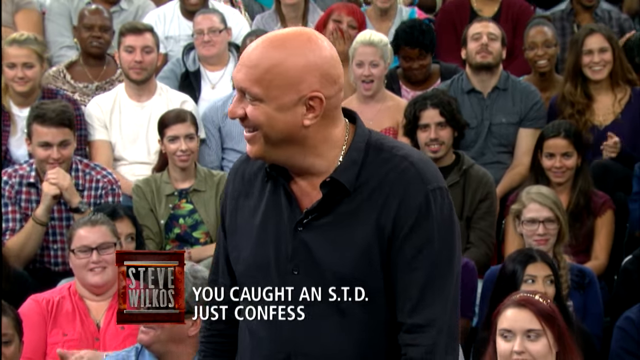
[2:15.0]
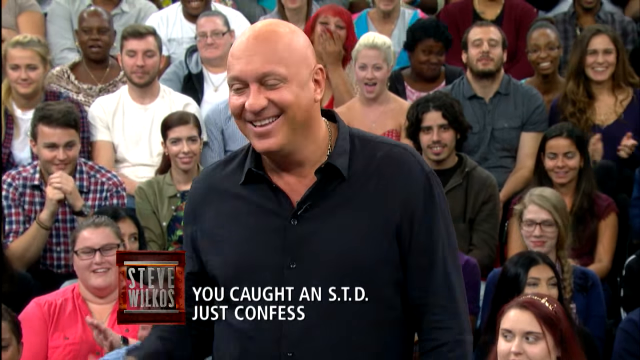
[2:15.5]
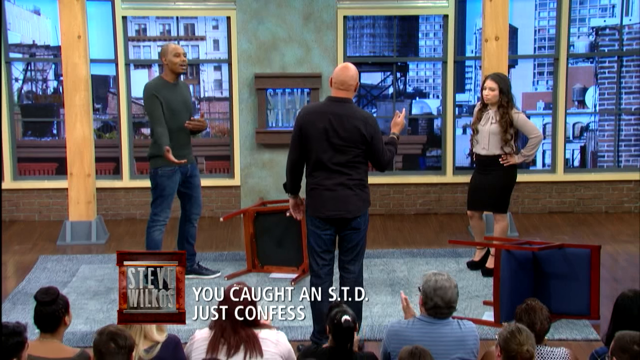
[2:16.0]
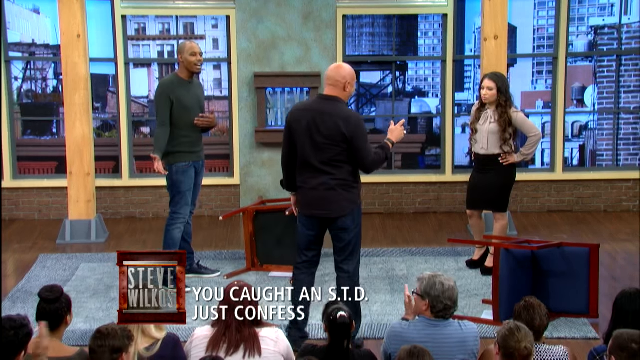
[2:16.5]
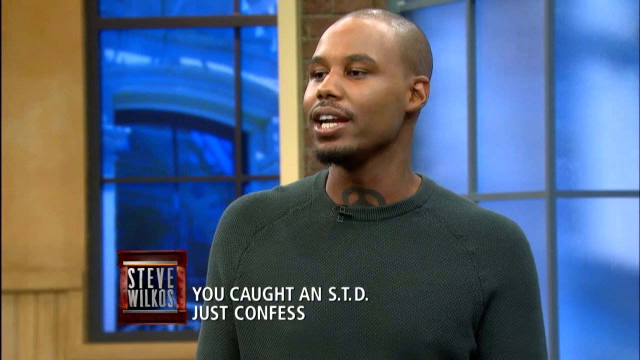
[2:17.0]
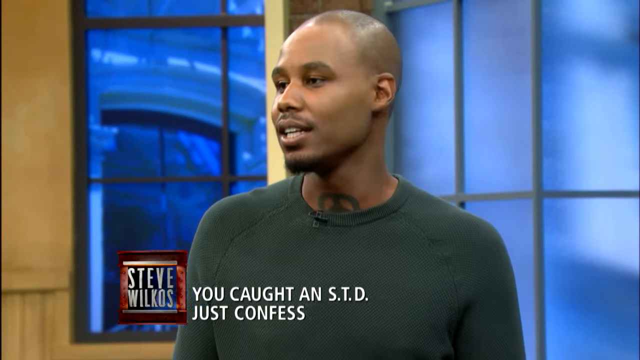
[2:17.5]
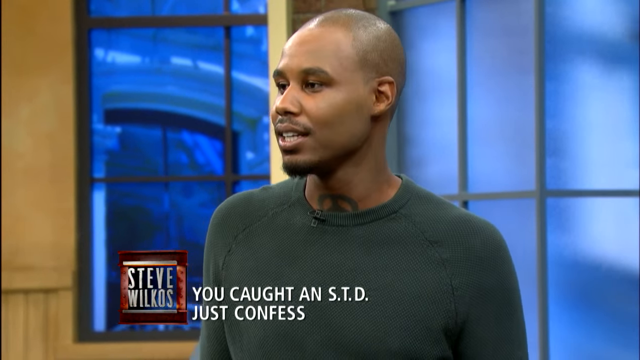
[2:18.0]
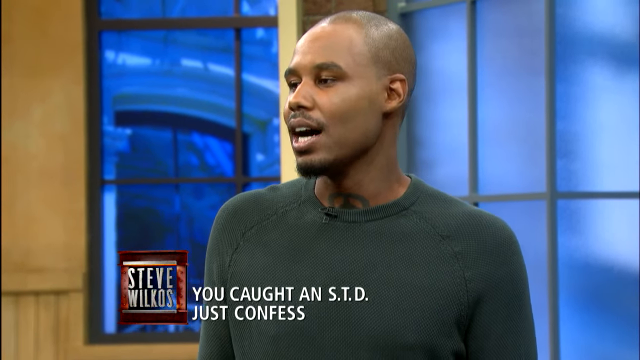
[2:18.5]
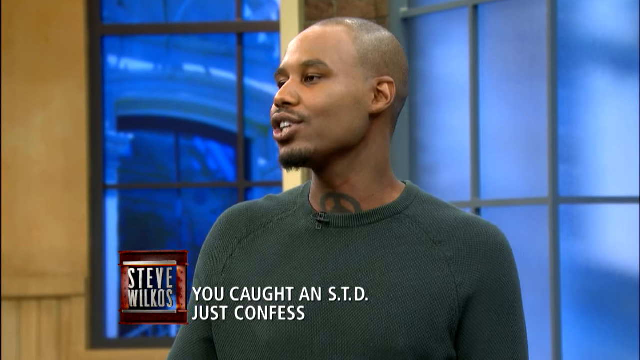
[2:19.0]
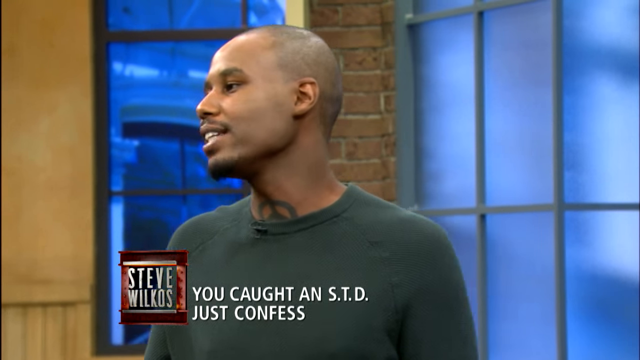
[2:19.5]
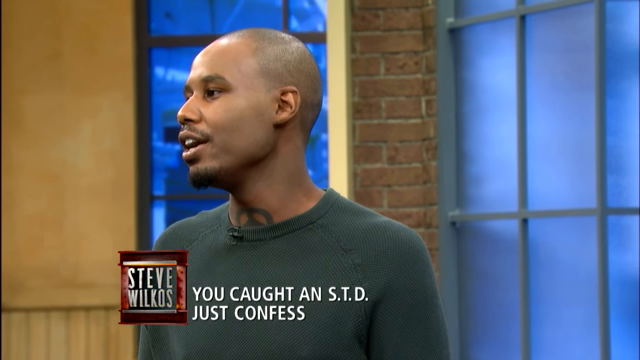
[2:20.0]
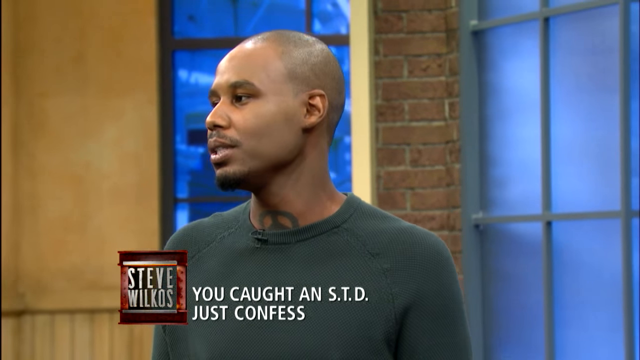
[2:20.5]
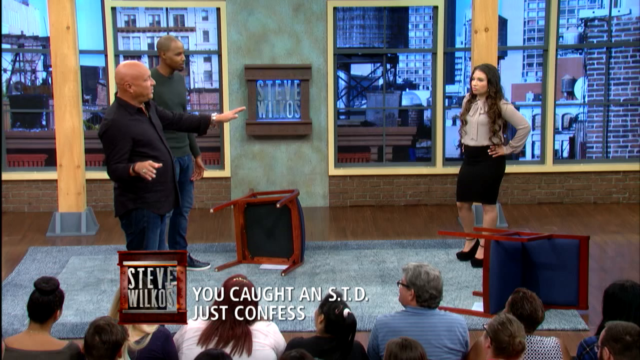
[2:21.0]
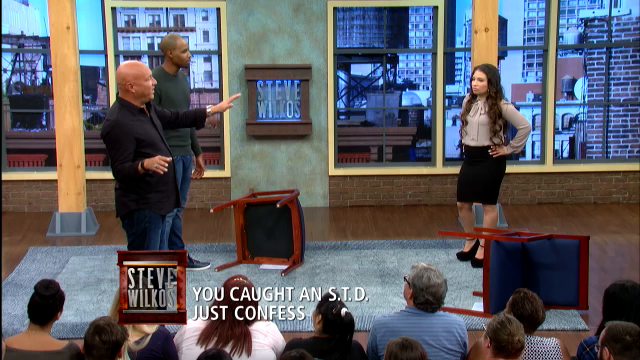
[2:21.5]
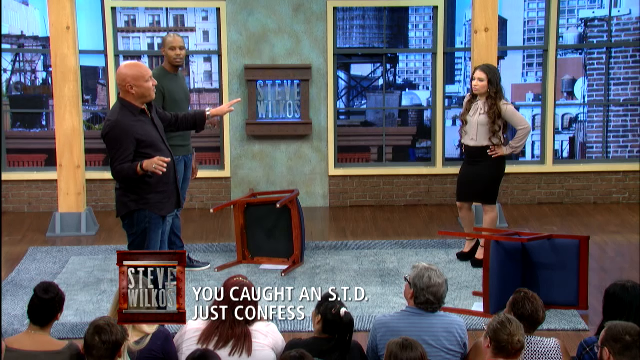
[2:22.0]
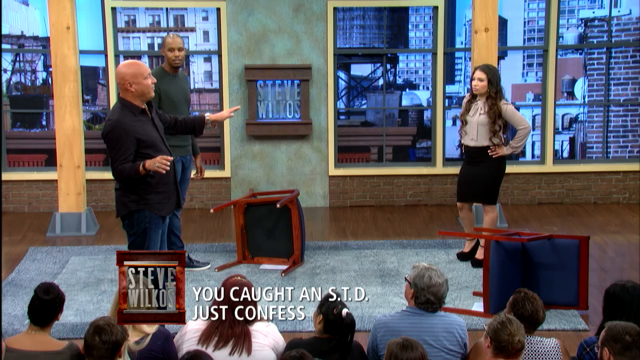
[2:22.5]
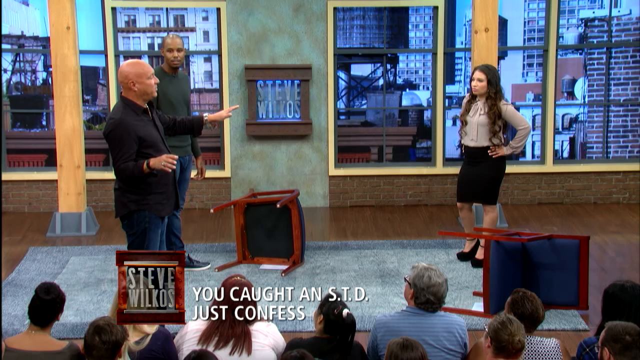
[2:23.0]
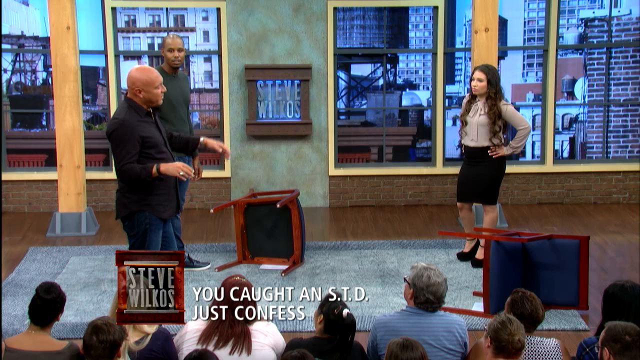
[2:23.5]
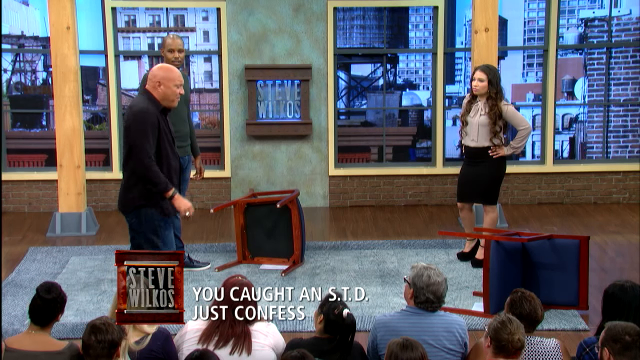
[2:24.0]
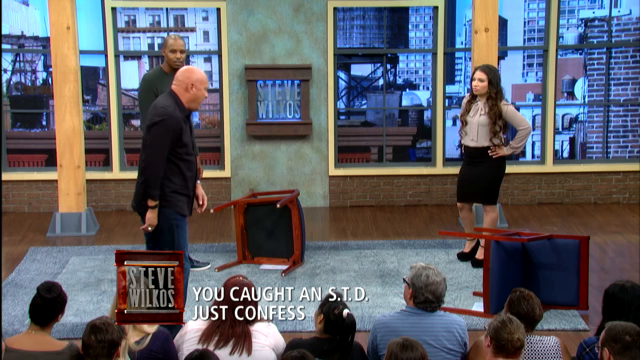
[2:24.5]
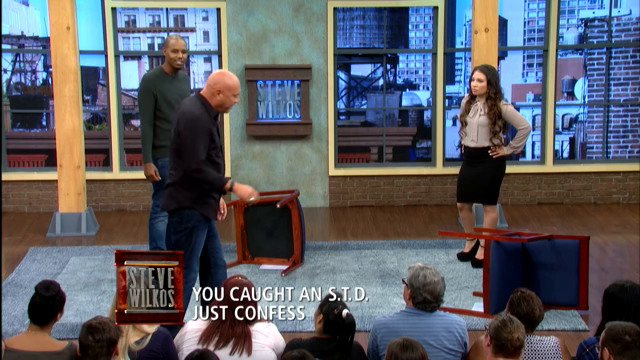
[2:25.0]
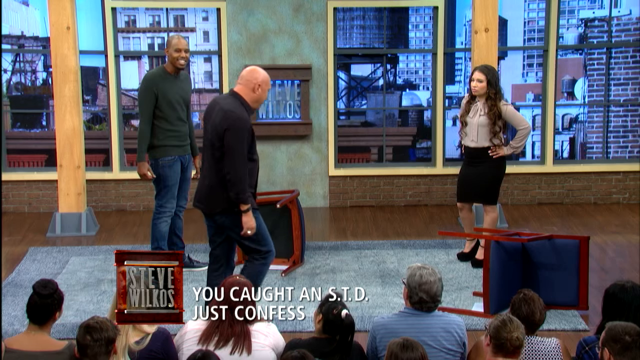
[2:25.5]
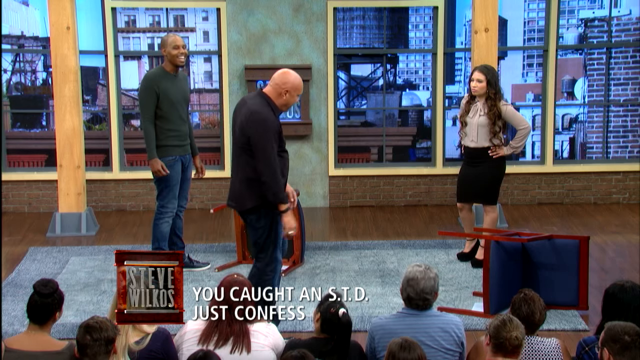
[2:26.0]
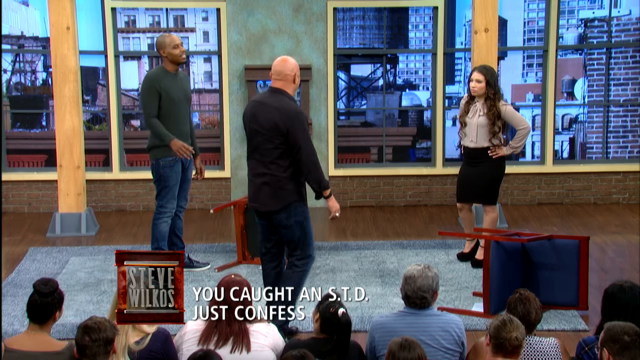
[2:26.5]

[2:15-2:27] After a close-up of the host laughing, the view returns to the back of his head. He seems to be gesturing toward the woman, holding his right hand up toward her, while the young man seems to be protesting, gesturing as if explaining something. The video goes to a close-up of the young man, who looks quite serious as he talks, probably the most serious he looks in the video. He is not looking at the camera but toward his left, probably explaining his case to the host. The video switches to a shot where the host is in profile in line with the young man; he looks at the woman and talks to her, then does an exaggerated slow, shuffling walk with his head down and his arms hanging heavily, which looks like some sort of mockery. Meanwhile, the young woman has her hands on her hips again in a somewhat defensive gesture, with her left knee popped.